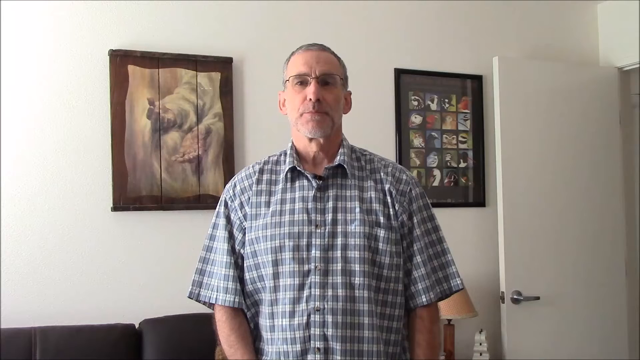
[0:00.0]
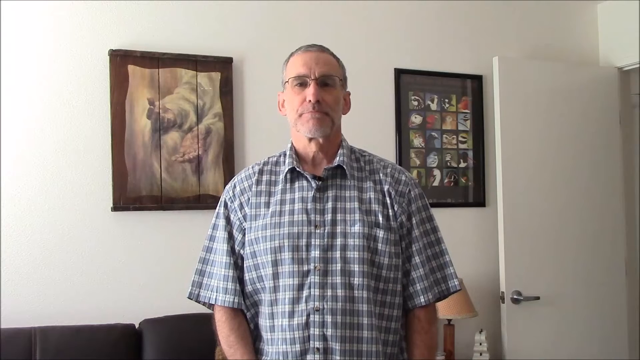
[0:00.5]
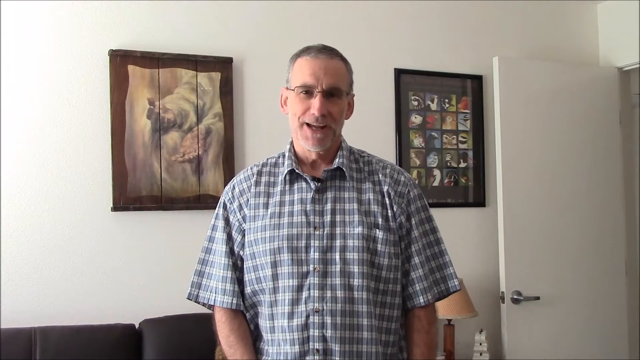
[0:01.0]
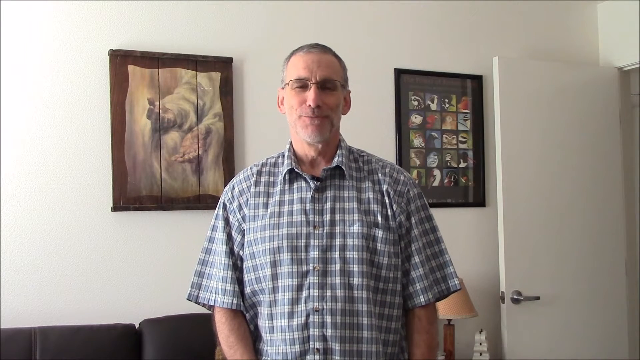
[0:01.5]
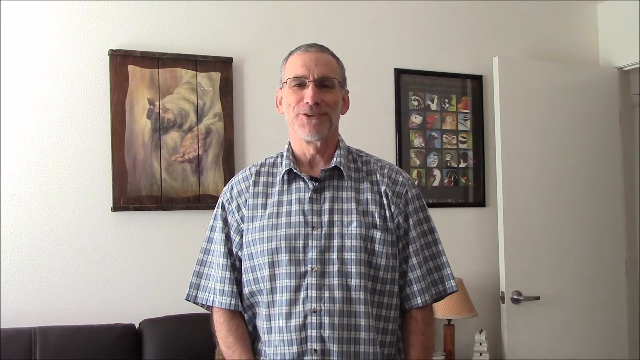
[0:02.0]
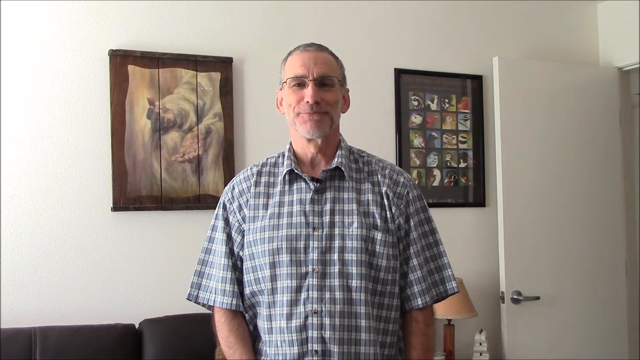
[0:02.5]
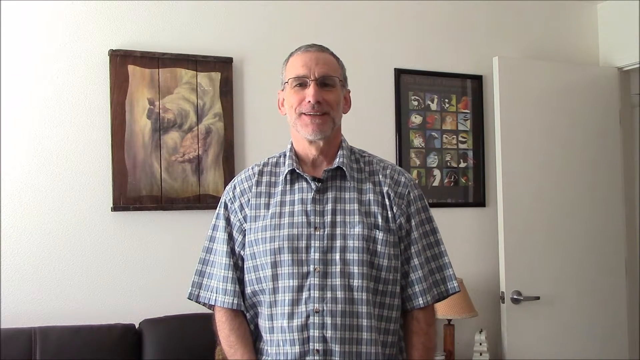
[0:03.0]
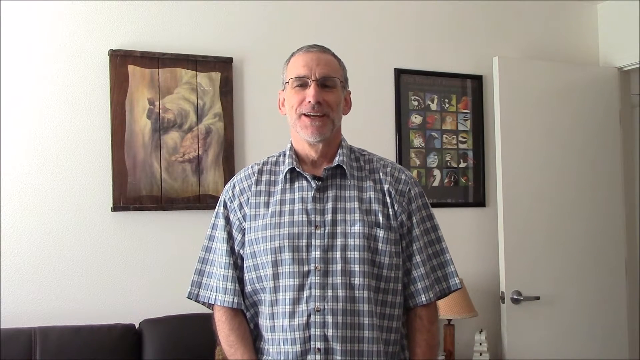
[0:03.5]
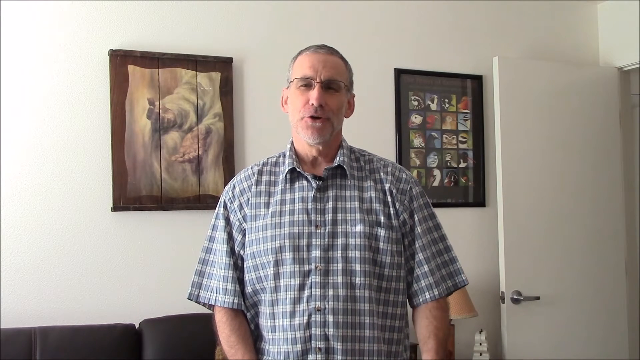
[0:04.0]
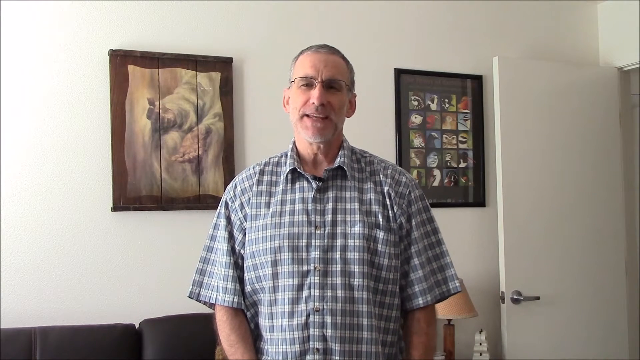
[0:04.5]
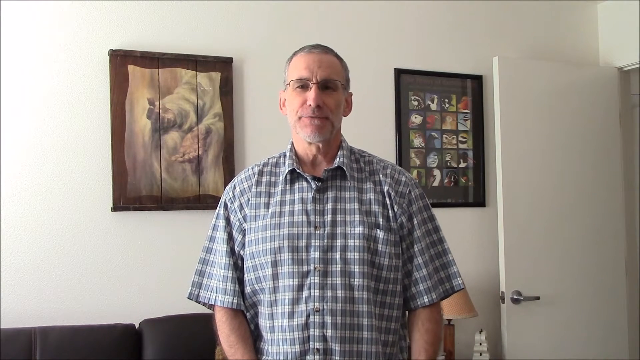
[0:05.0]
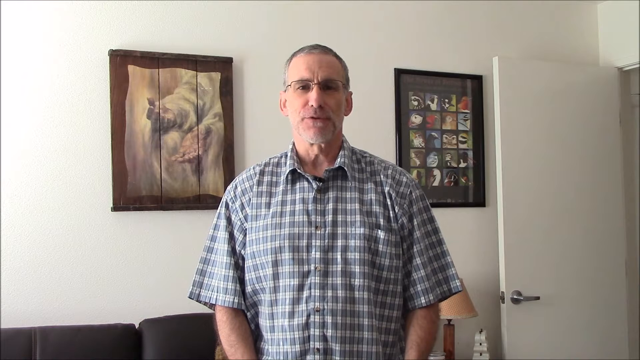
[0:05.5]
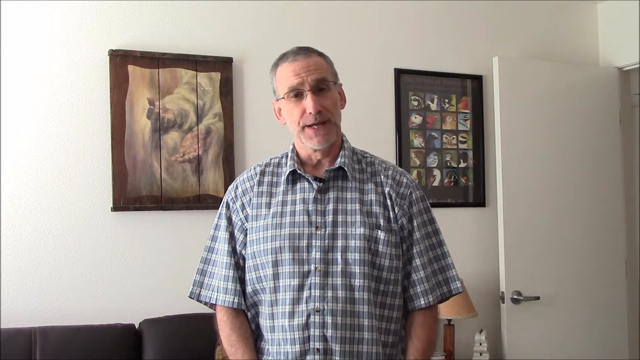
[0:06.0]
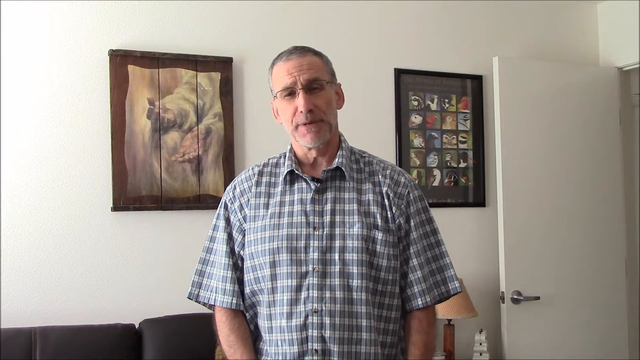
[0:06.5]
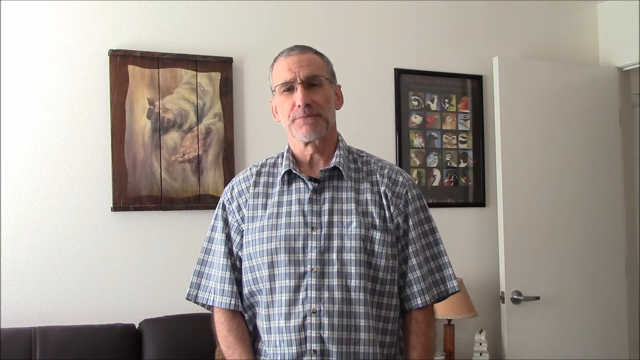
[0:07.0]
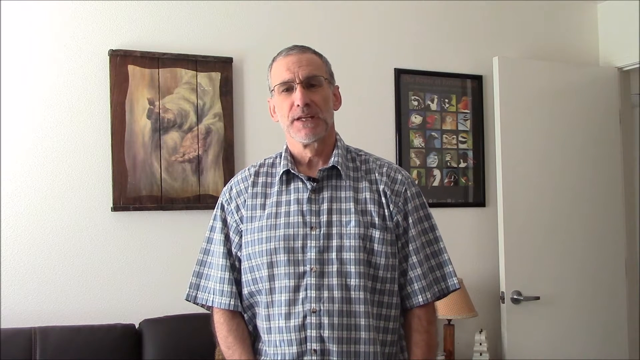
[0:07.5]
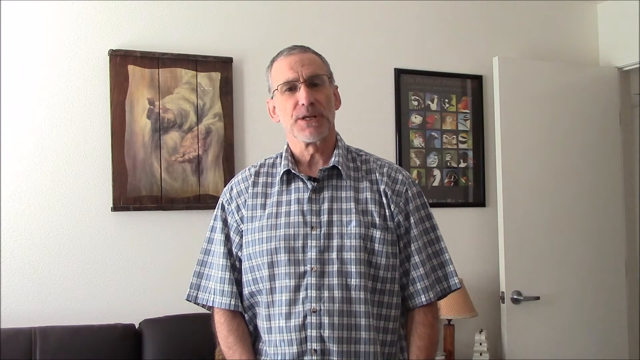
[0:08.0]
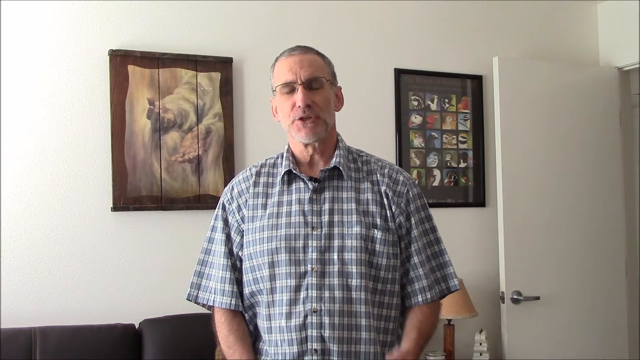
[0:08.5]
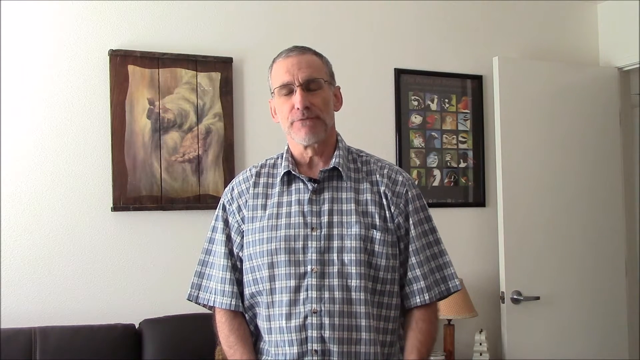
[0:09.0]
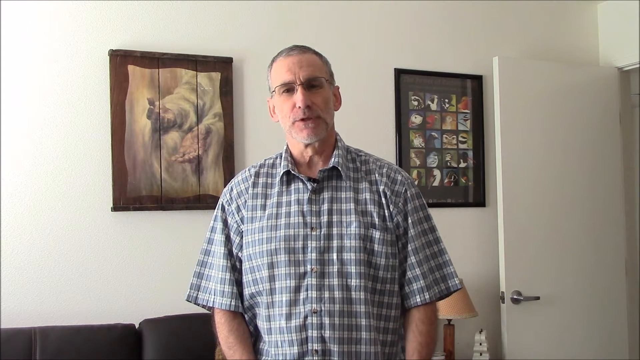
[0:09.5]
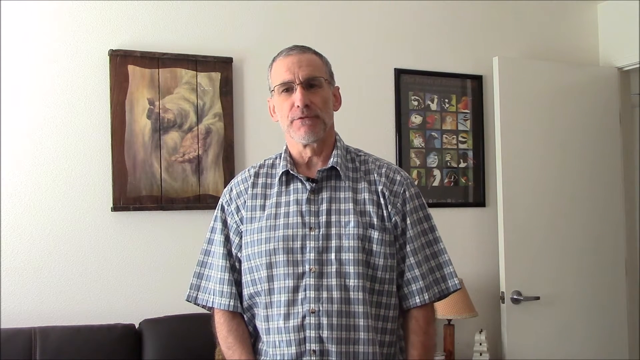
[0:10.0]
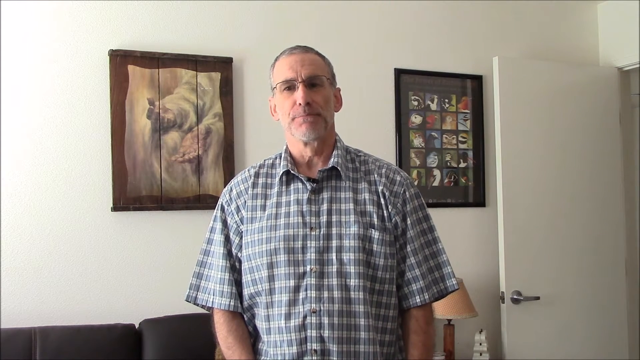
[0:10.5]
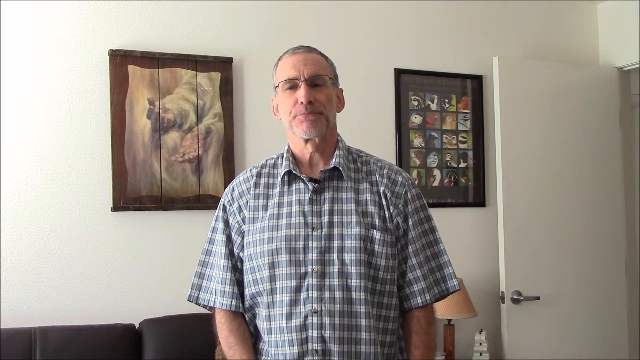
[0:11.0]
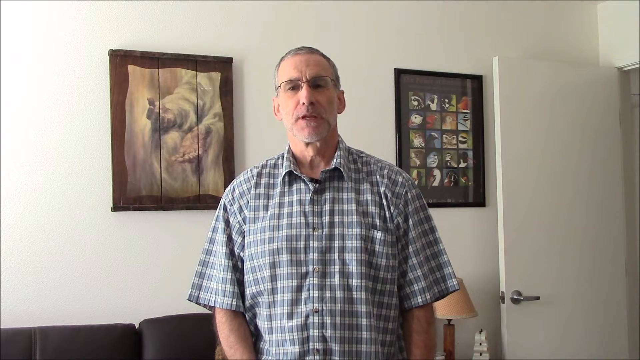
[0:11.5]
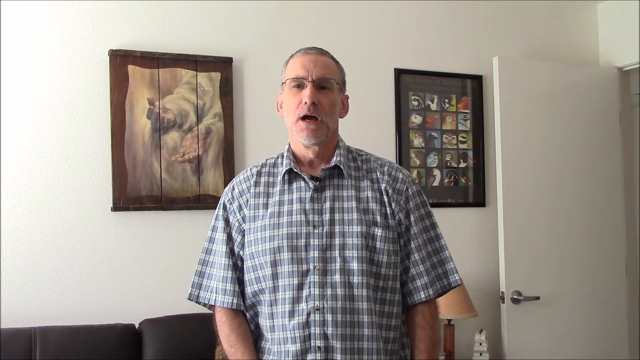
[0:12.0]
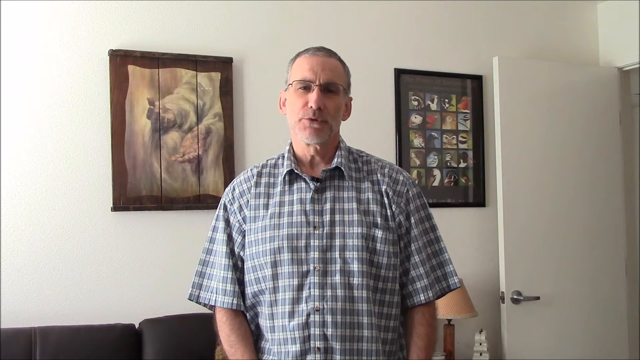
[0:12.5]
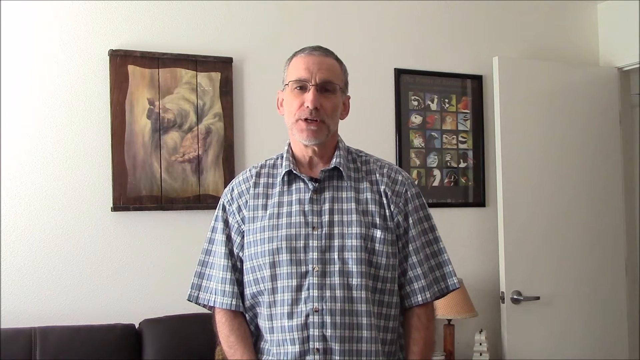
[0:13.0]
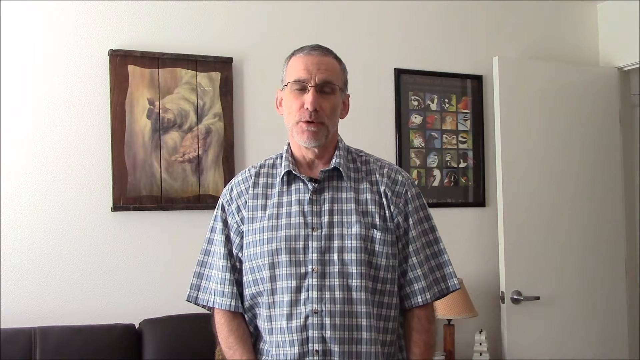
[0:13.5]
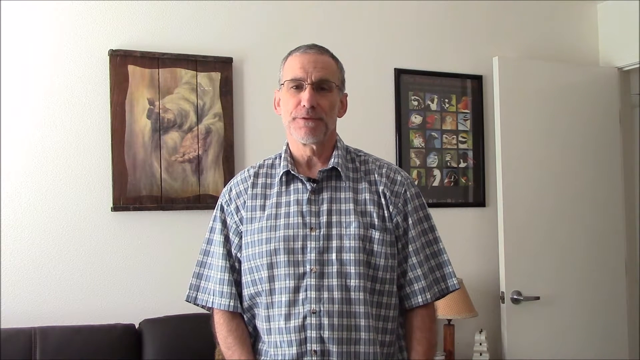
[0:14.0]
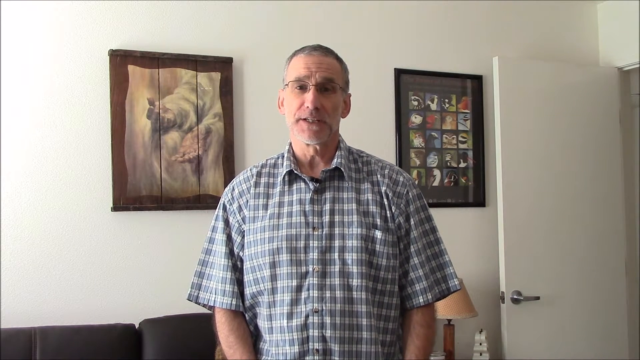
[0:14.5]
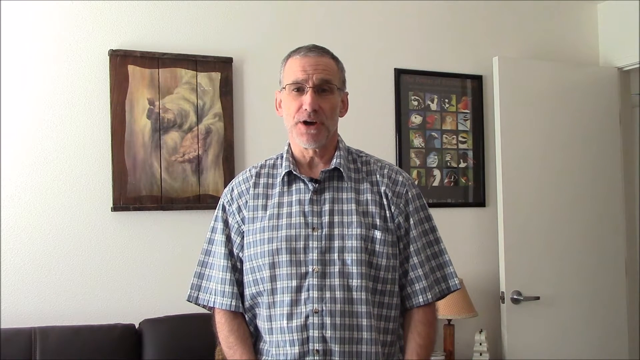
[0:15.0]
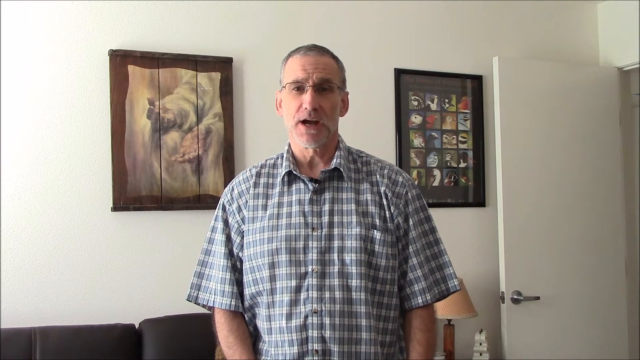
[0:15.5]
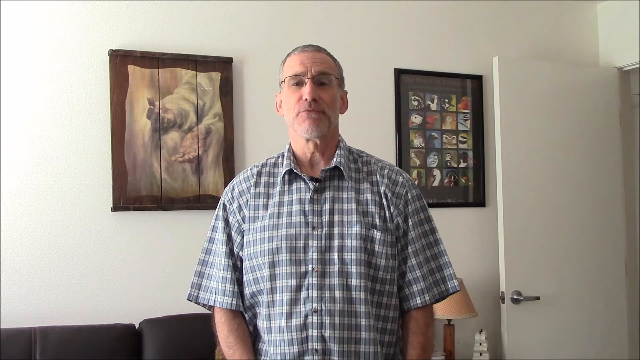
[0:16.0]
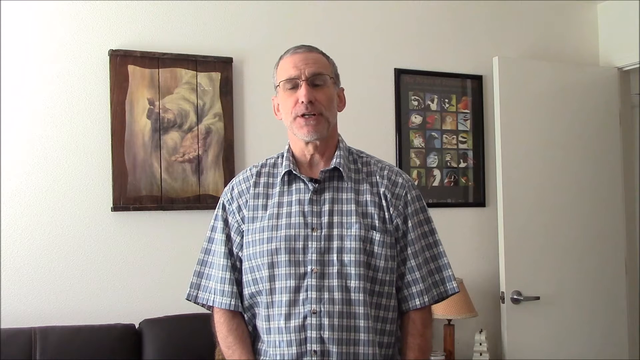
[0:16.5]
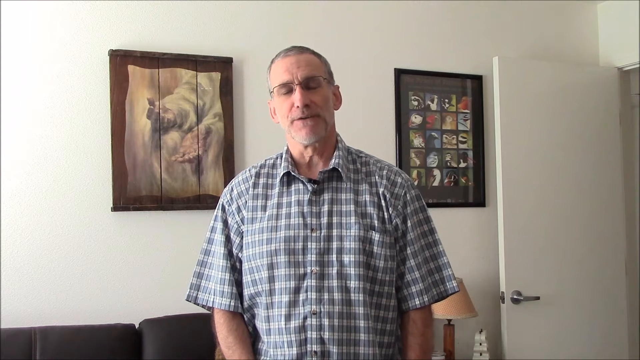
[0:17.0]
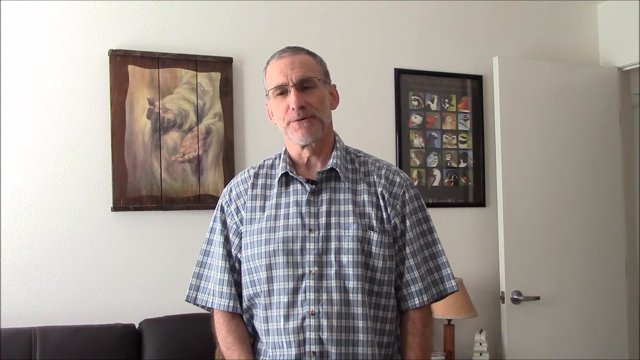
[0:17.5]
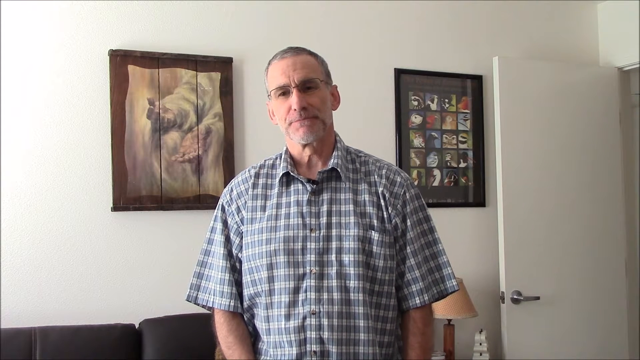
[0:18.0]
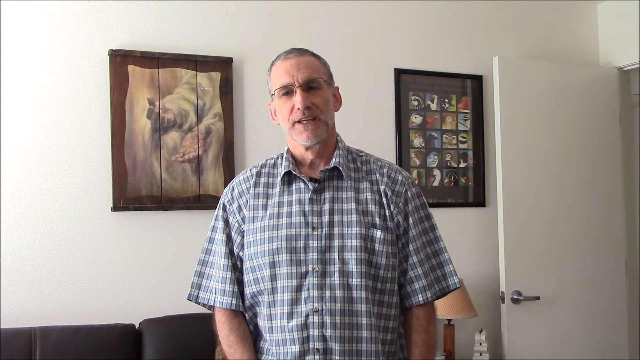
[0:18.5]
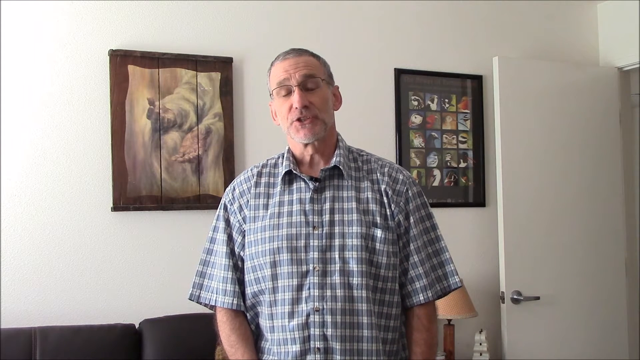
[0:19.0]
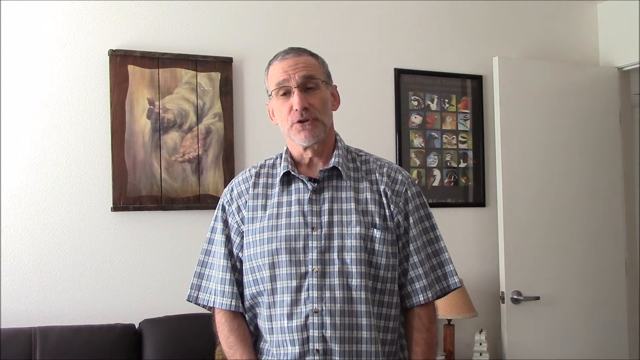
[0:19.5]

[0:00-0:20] An elderly Caucasian man, who looks like he may be in his mid to late 60s, talks directly to the camera. He wears a white and gray plaid shirt and glasses, and has gray hair on top of his head and a thin gray beard. He stands in a room with all white walls, with two paintings on the walls behind him. One has a brown frame and is a watercolor that looks like a pair of hands; the other has a black frame and an image that looks like the heads of birds. The door of the room is wide open and has a silver handle. There is also a couch that looks like black leather, and a side table with a lamp on it; the lamp has a brown base and a beige shade. There also appears to be another piece of white decor on top of the side table.